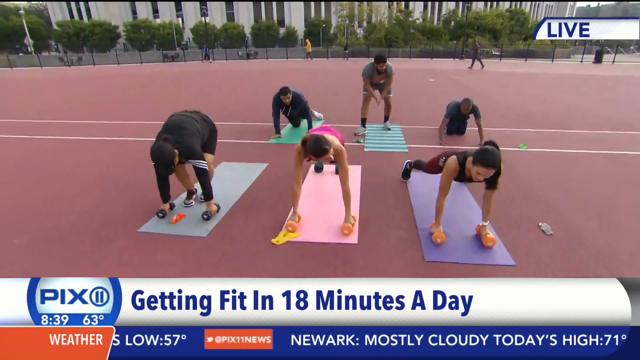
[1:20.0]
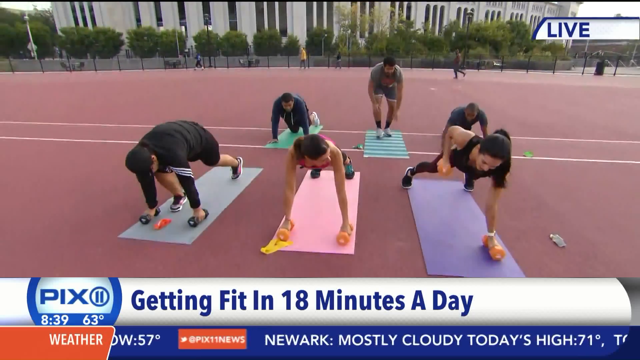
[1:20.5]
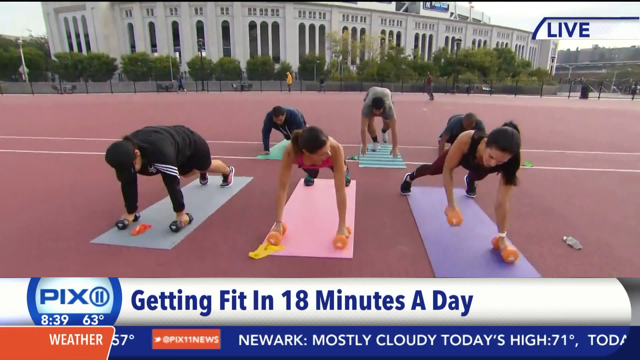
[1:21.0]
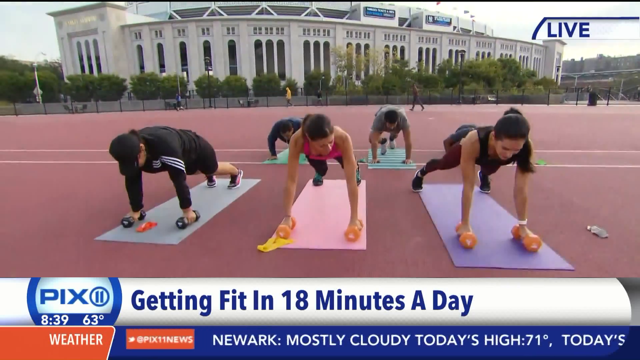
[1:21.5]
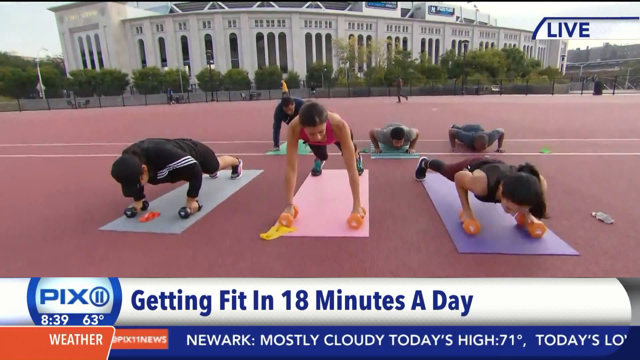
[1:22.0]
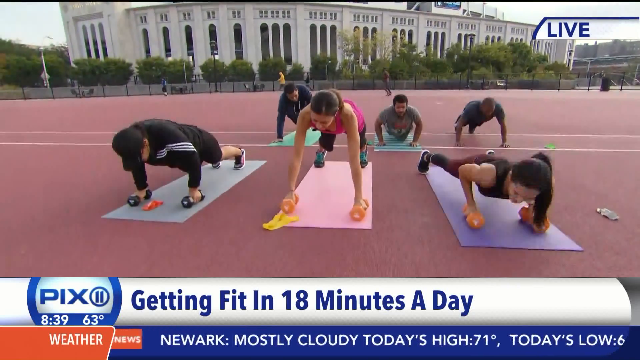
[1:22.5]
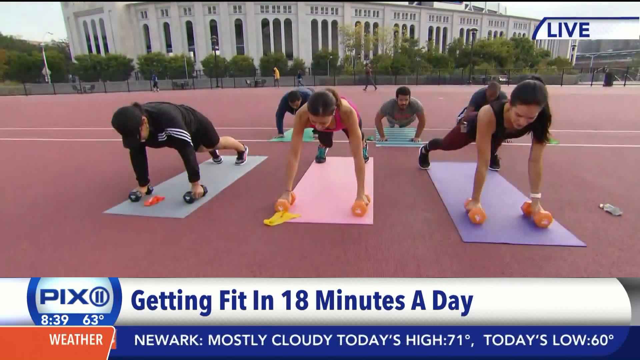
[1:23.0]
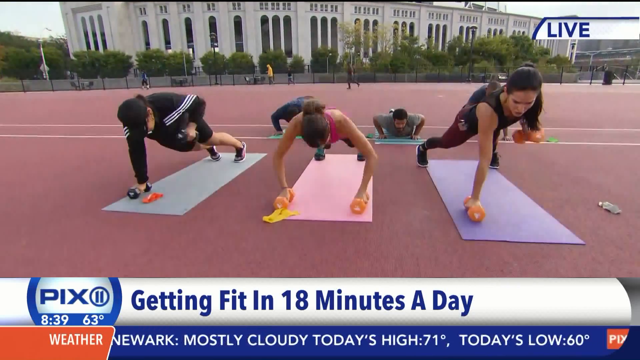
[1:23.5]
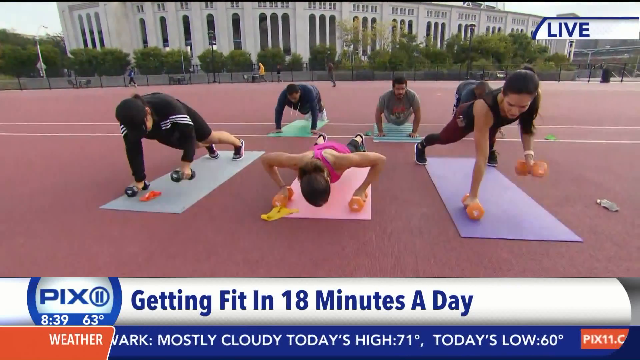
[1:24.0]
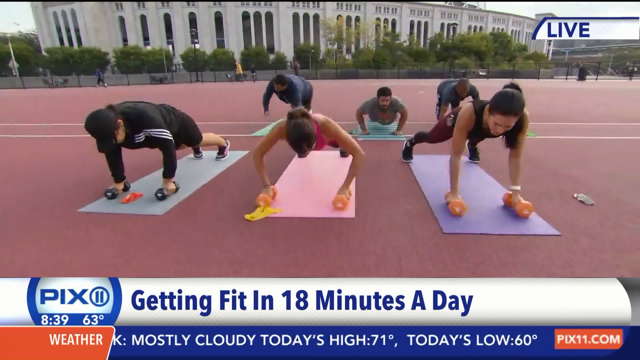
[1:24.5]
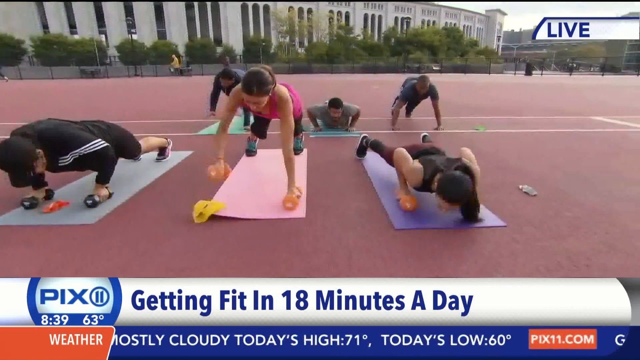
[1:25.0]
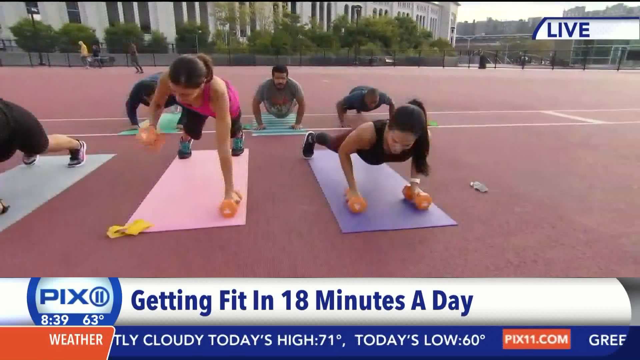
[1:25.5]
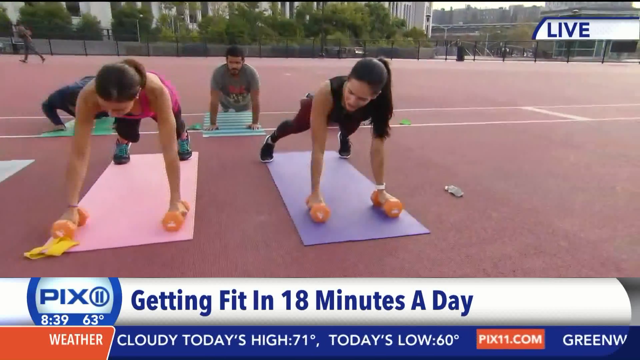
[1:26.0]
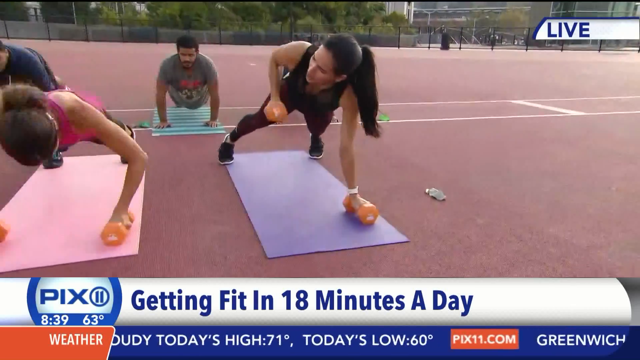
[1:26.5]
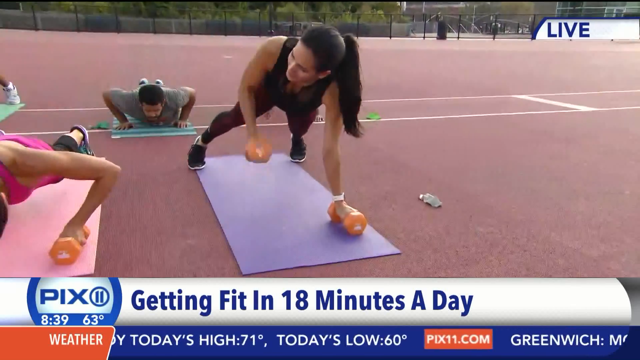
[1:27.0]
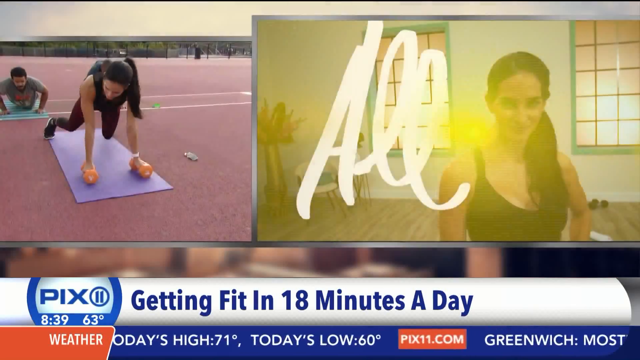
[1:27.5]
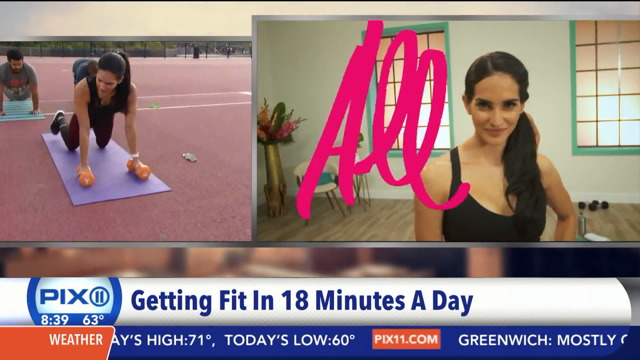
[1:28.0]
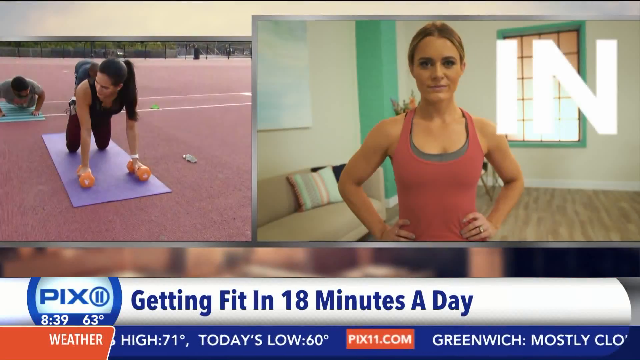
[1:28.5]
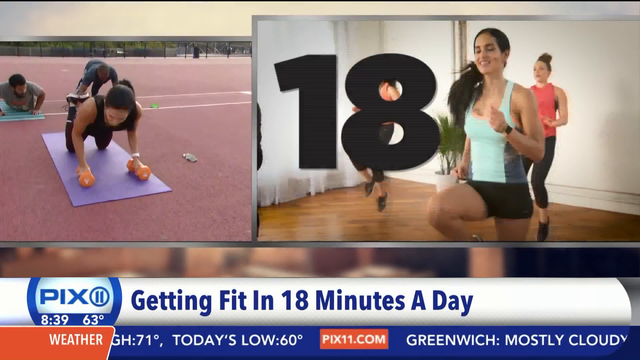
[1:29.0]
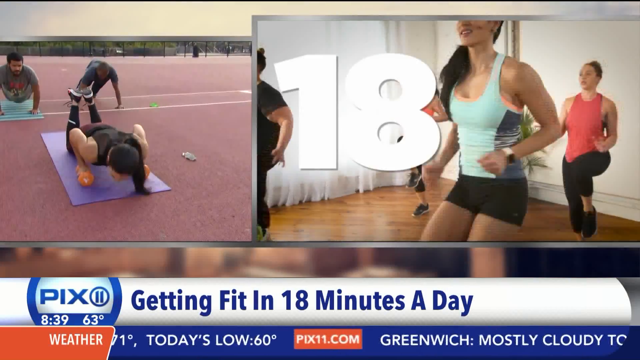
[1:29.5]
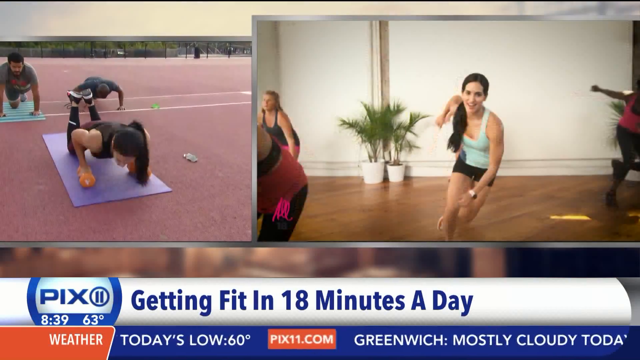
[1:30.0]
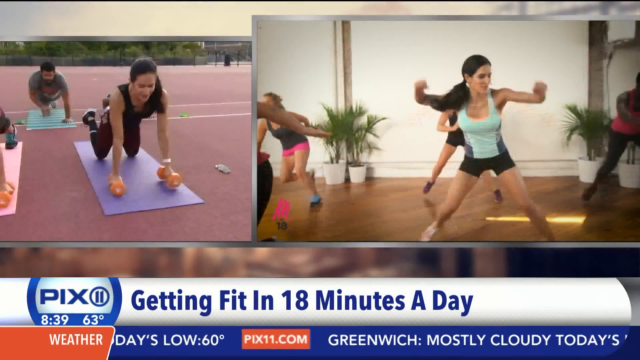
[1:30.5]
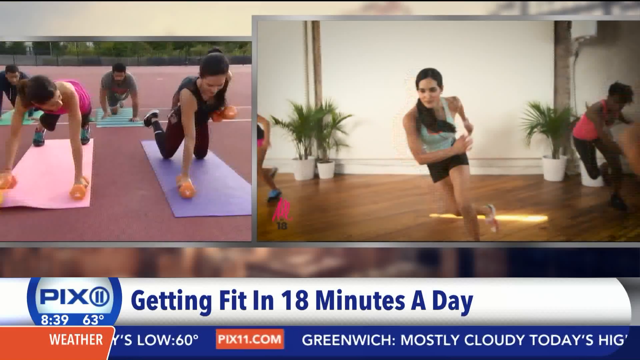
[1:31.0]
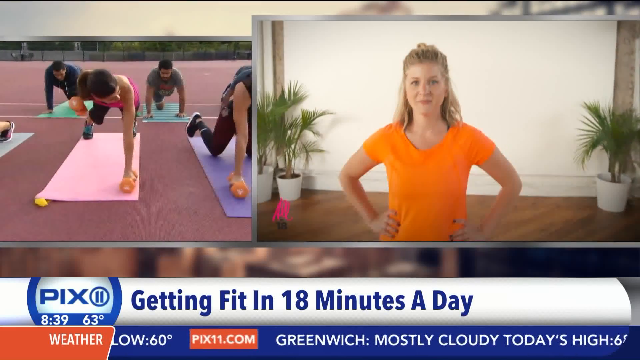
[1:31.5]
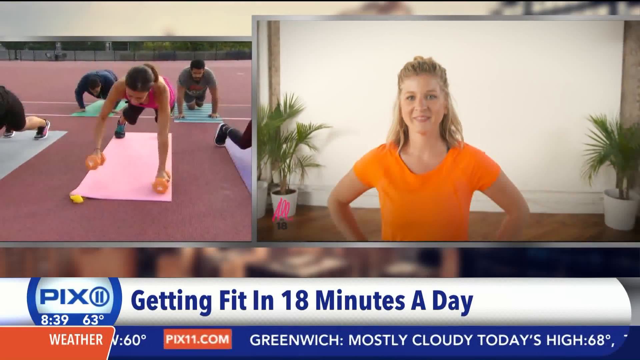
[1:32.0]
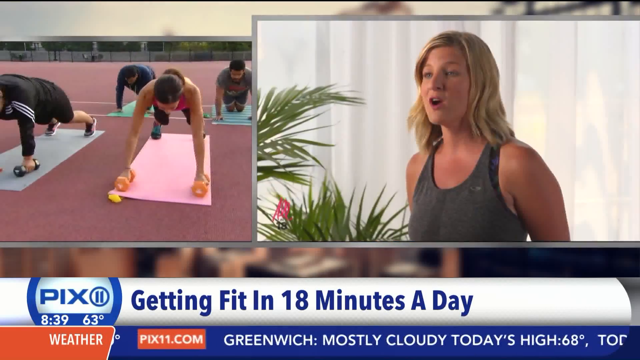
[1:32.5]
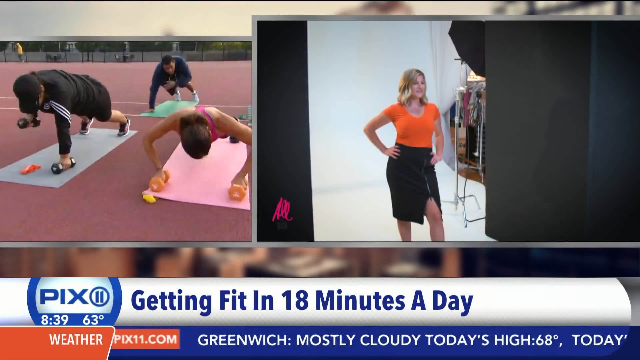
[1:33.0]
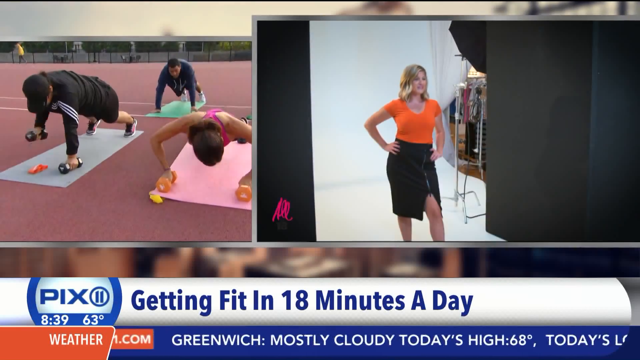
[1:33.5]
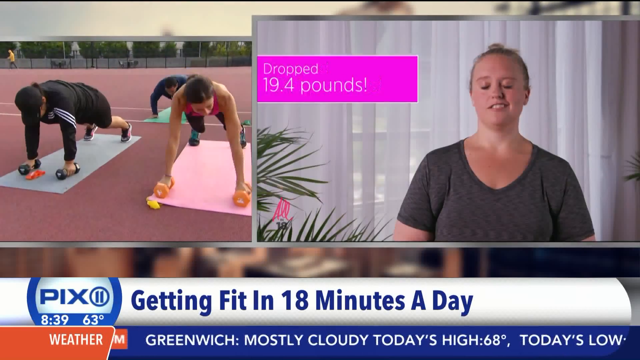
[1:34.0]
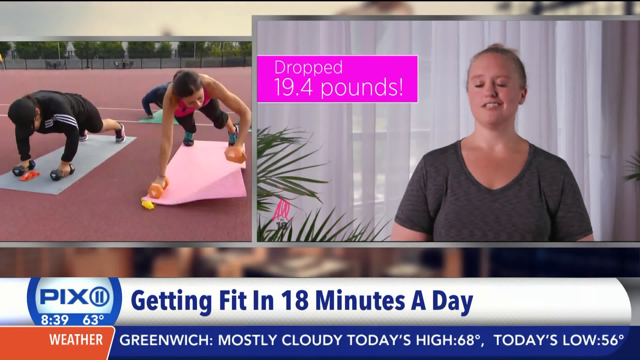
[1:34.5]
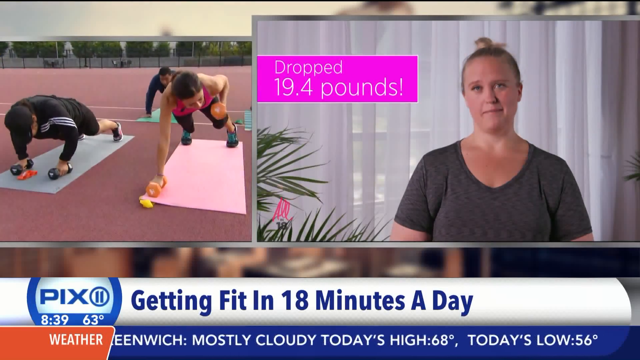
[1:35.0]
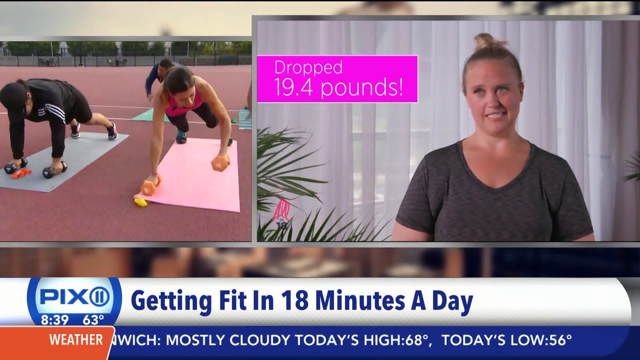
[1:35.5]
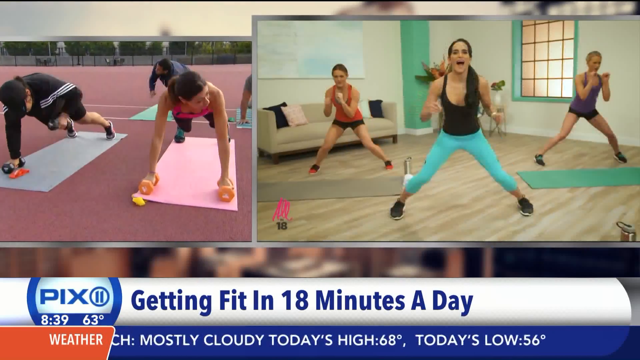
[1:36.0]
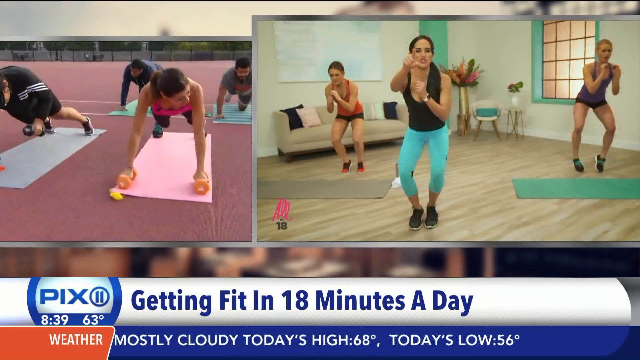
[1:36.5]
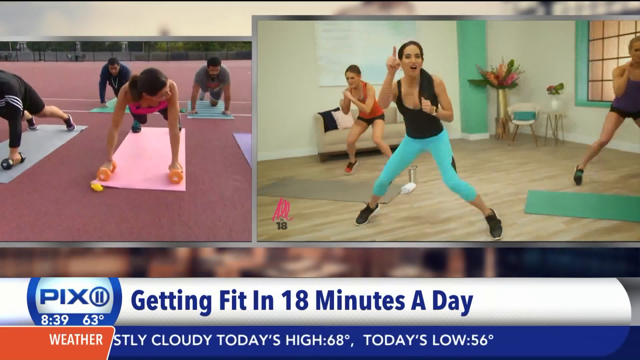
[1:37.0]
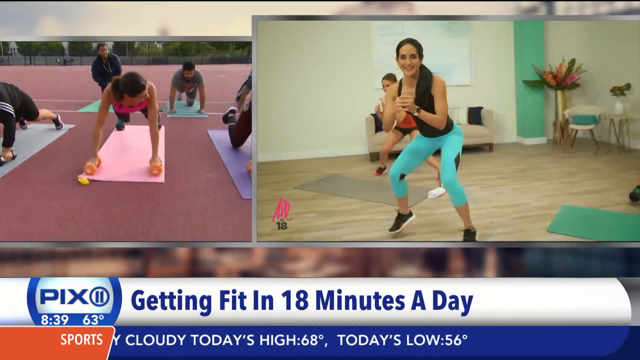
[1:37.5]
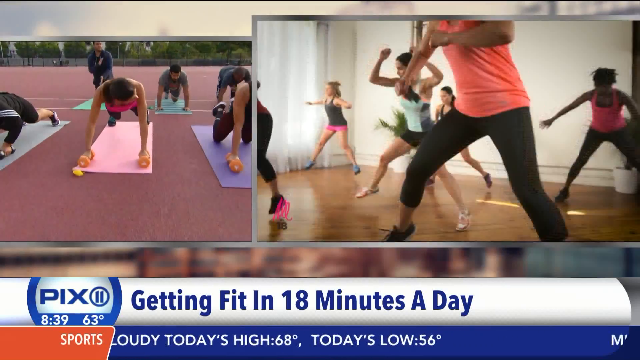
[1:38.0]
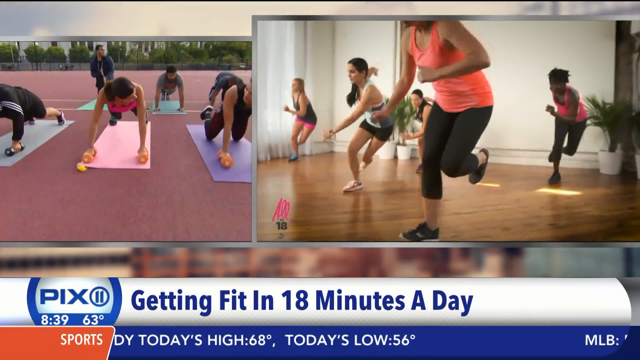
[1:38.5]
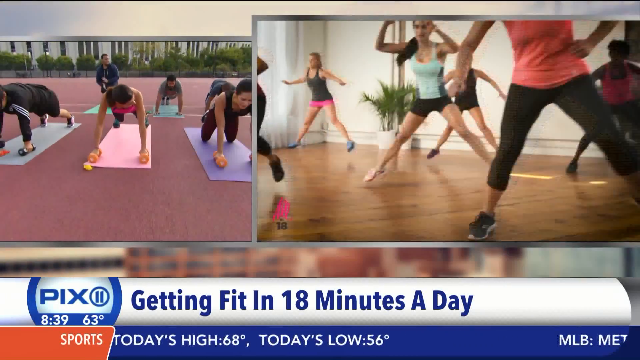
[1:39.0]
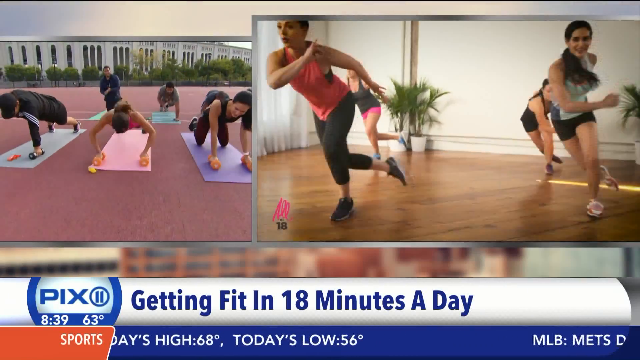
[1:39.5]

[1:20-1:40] Different people in the park in the Bronx perform an exercise pulling on dumbbells while bent over. The person on the left, near Elisa, is the actual personal trainer. Footage of other people doing other exercises then appears with a huge "18" on screen, referring to 18 minutes a day of physical activity. A person talking about his past experience with this 18-minutes-a-day practice follows, and he seems to have lost 19.4 pounds. Many people then exercise actively and quickly inside a room.